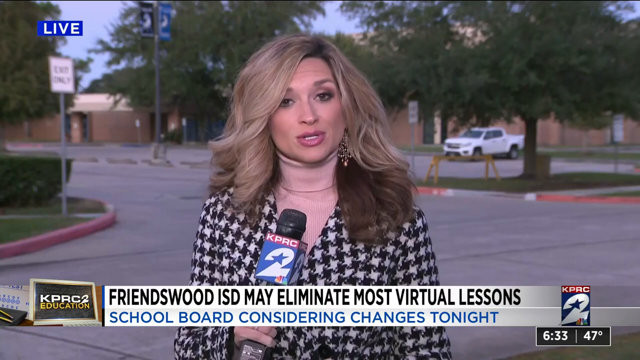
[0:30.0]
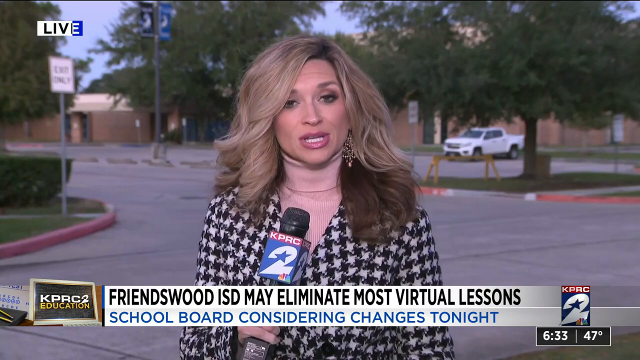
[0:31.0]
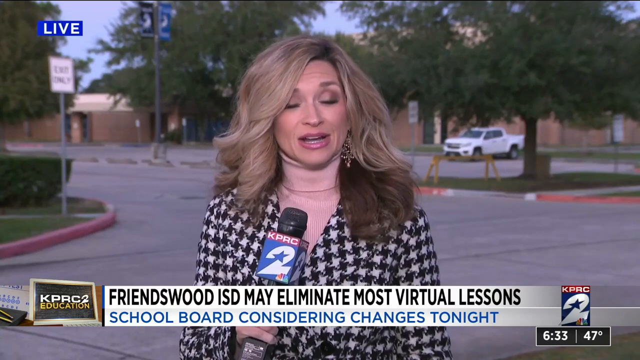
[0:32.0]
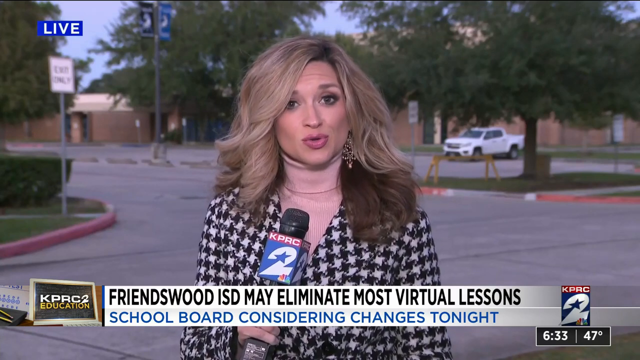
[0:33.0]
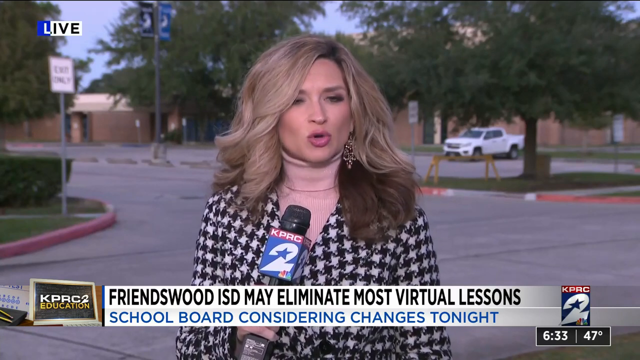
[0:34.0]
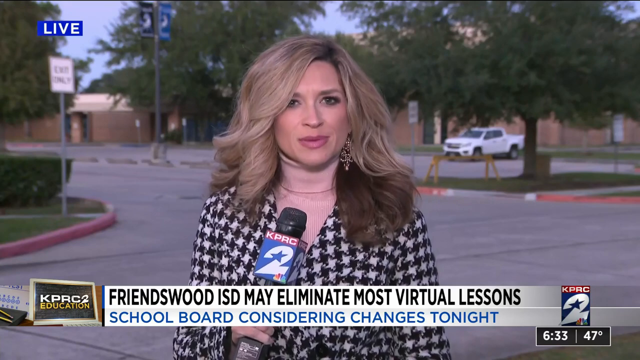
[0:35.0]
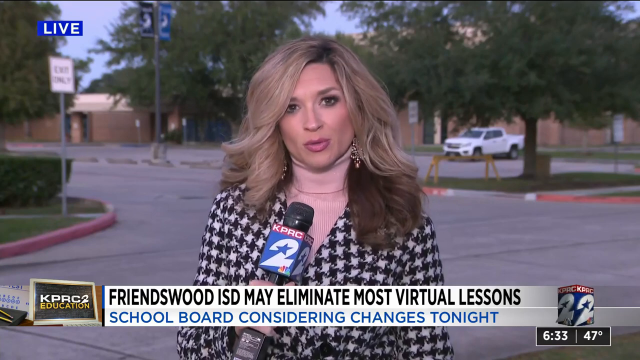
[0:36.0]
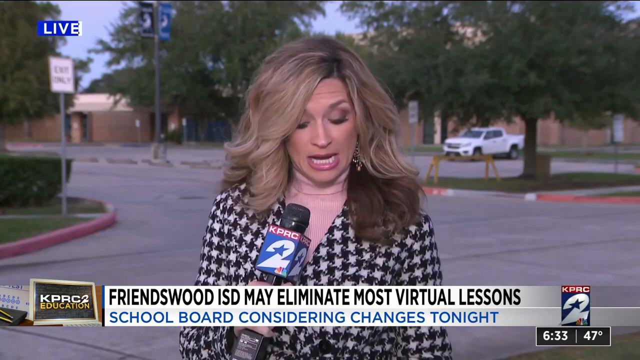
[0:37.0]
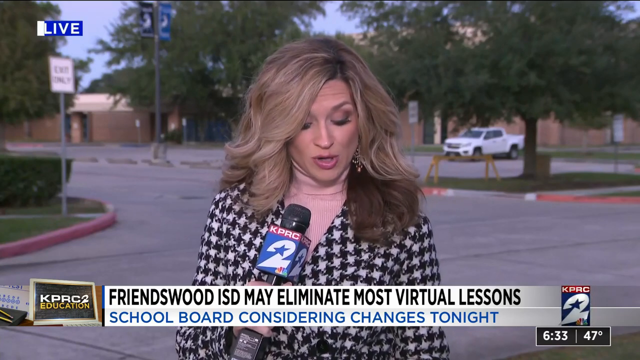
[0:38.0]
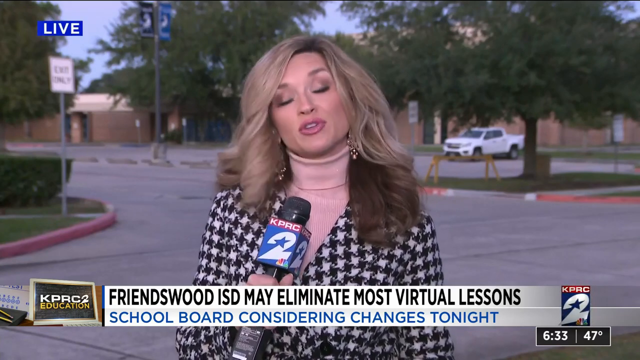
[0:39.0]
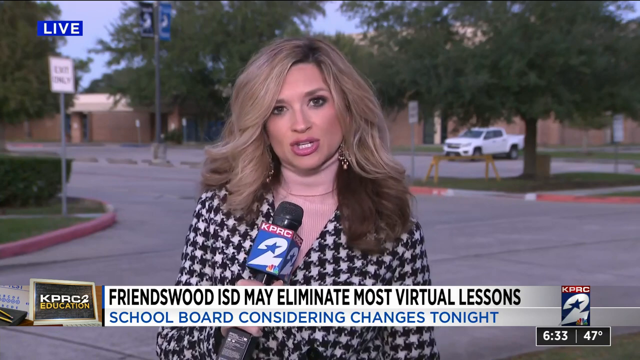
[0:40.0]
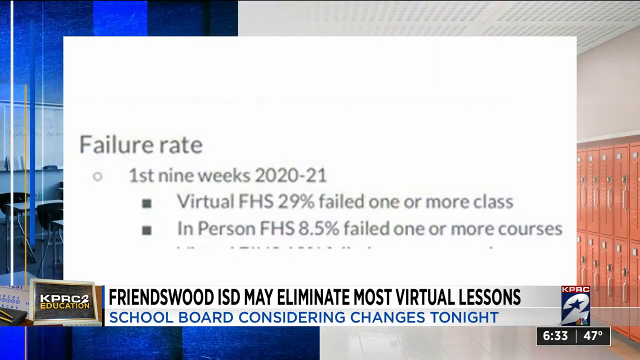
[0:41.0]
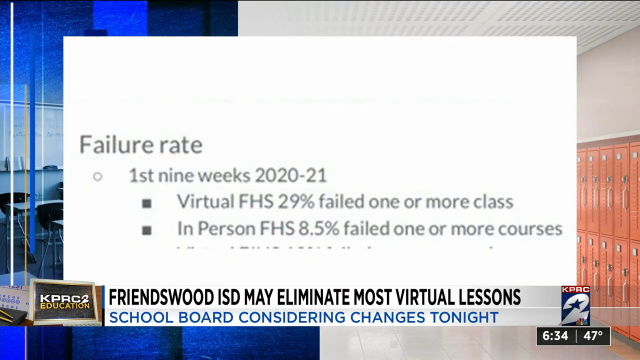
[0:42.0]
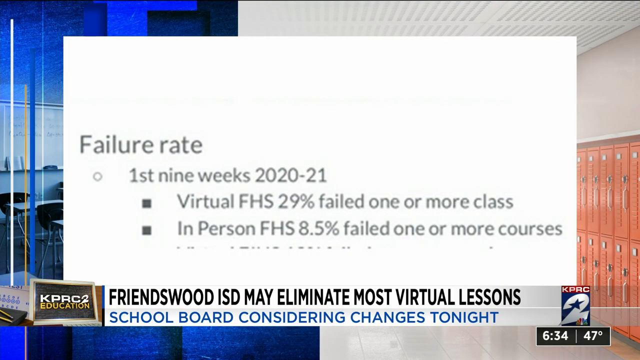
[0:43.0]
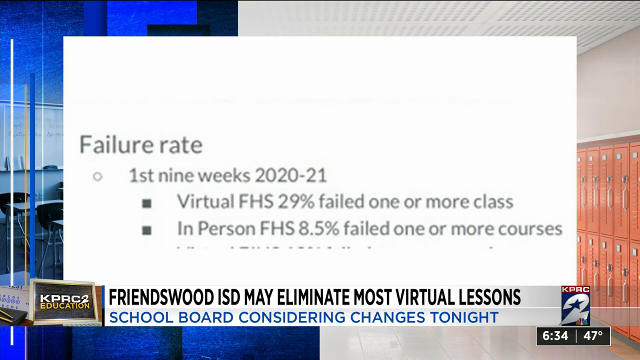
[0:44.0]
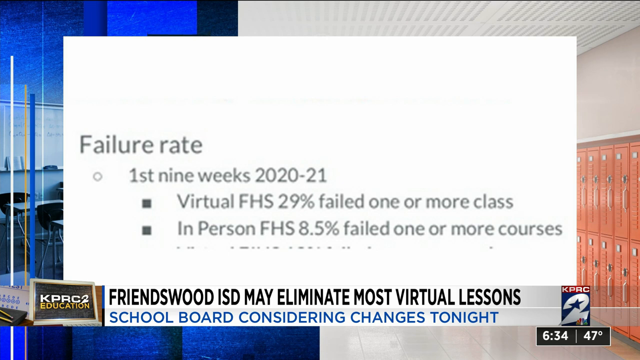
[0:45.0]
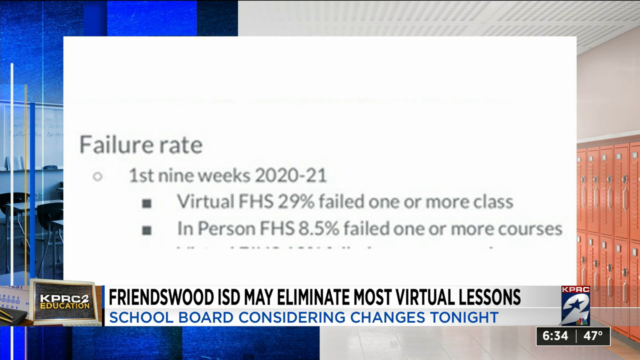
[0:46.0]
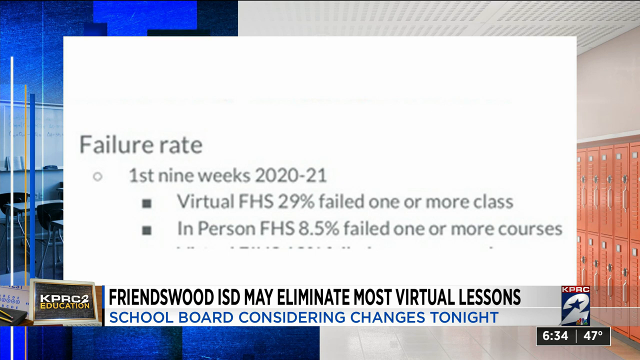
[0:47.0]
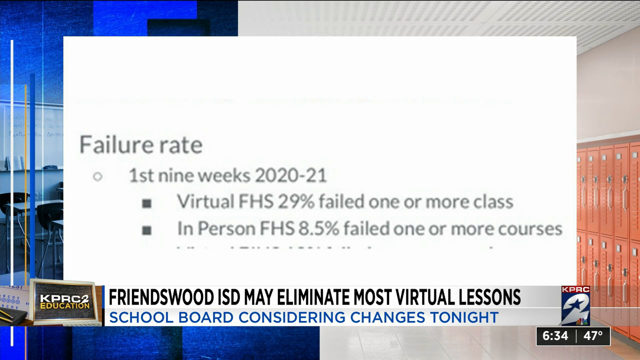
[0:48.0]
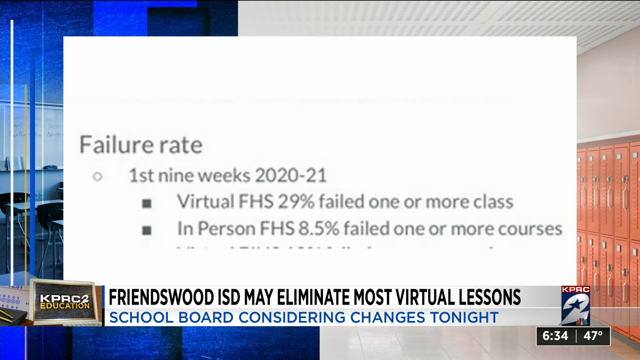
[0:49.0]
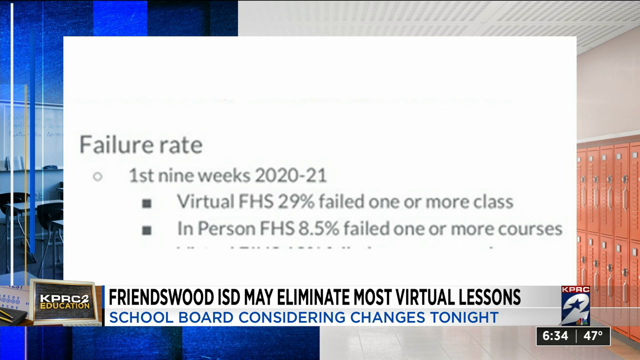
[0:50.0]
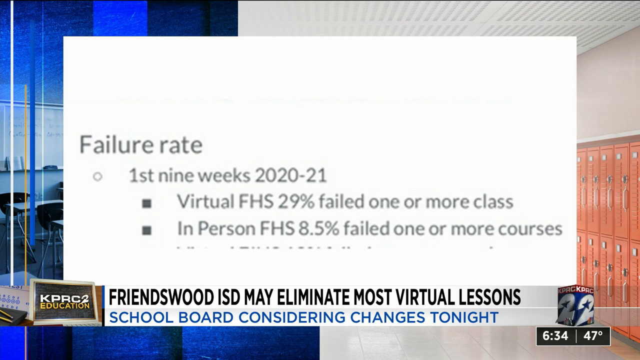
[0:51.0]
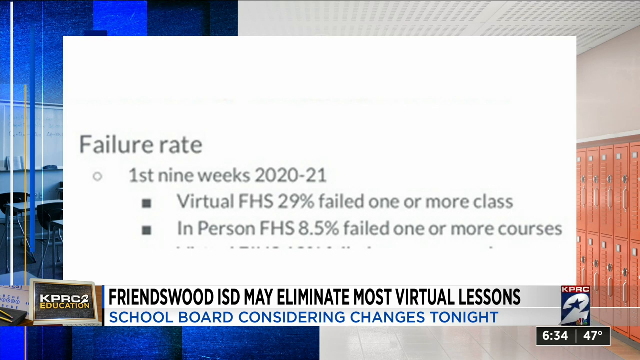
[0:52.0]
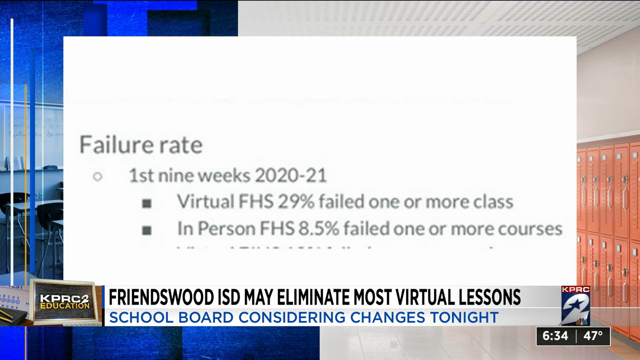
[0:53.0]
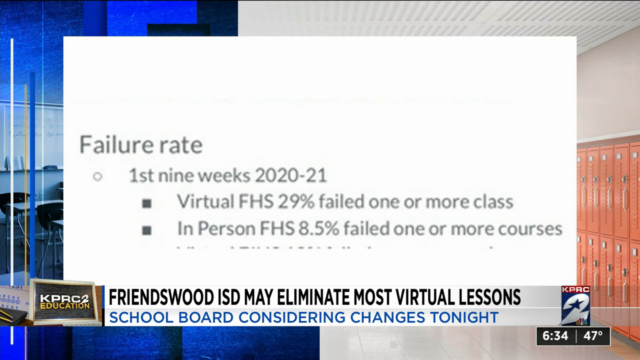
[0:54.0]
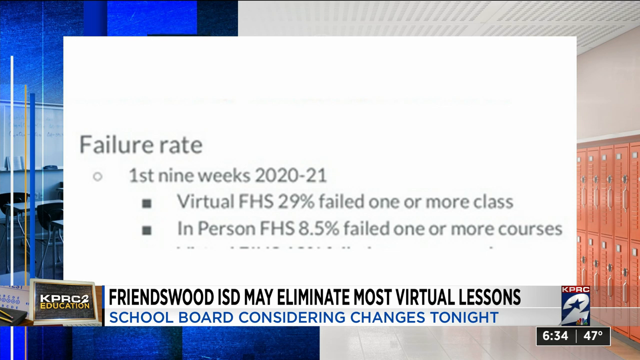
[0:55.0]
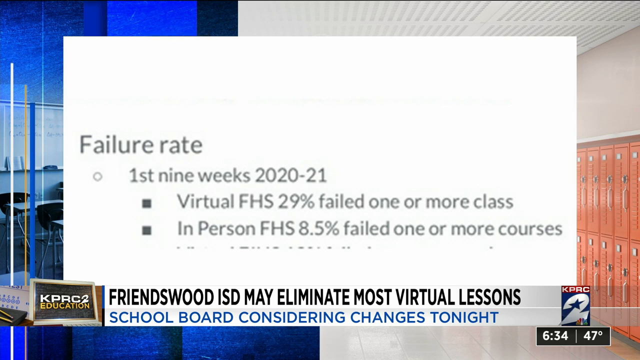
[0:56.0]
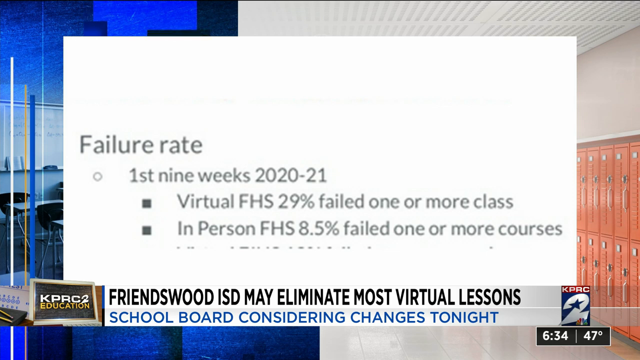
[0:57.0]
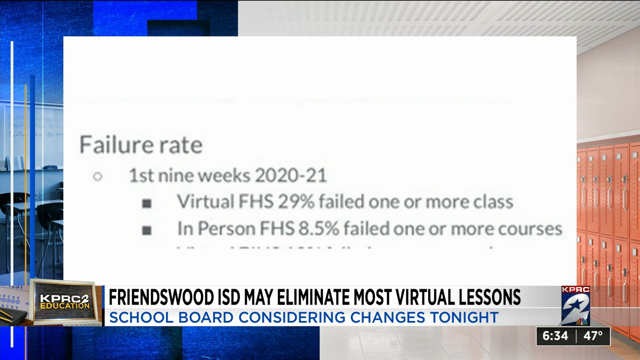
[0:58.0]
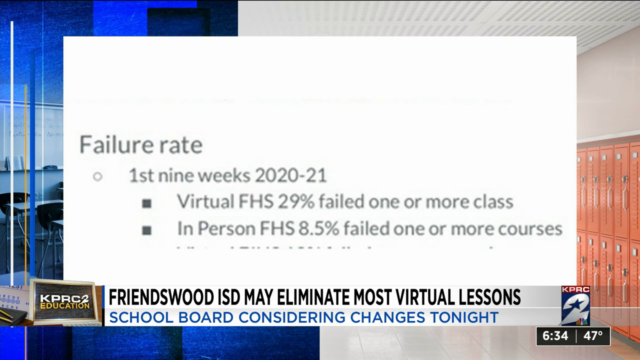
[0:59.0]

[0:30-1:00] The news report continues with the reporter still holding a microphone in her right hand; the microphone carries the news network's logo in a sort of cube shape. The video then cuts to a graphic about failure rate. It has a bullet point reading "first nine weeks 2020 through 2021," with more bullet points under it: "virtual FHS 29% failed one or more class" and "in-person FHS 8.5% failed one or more class."